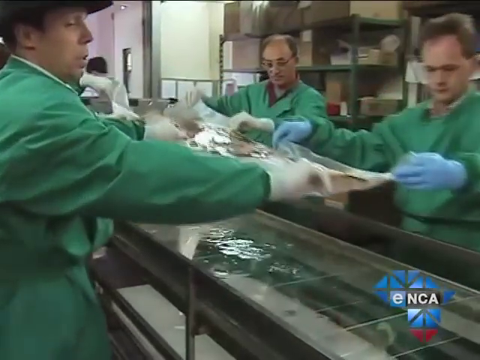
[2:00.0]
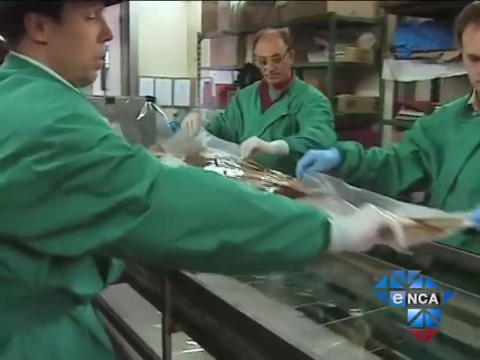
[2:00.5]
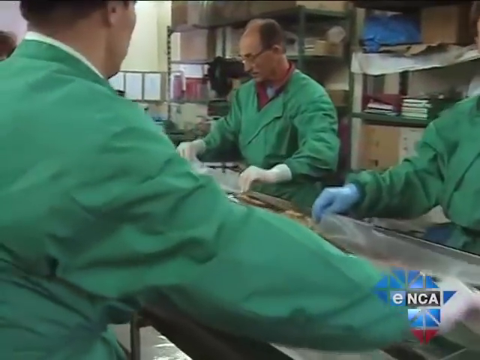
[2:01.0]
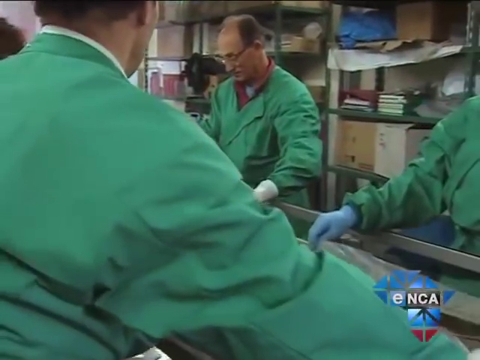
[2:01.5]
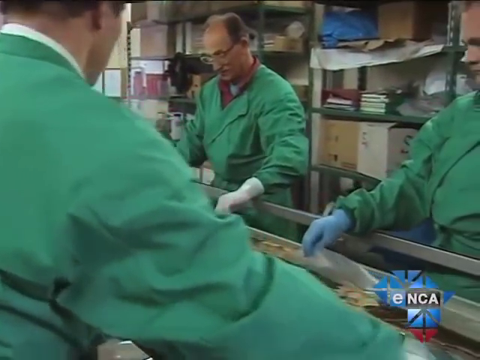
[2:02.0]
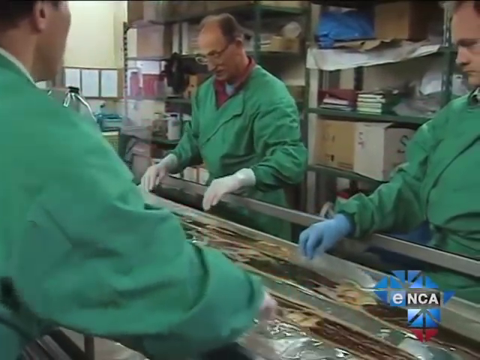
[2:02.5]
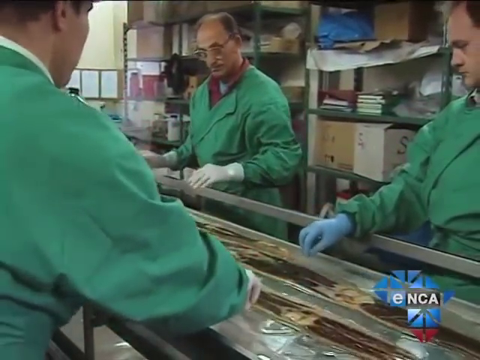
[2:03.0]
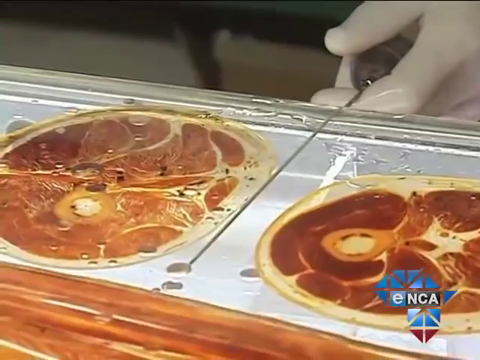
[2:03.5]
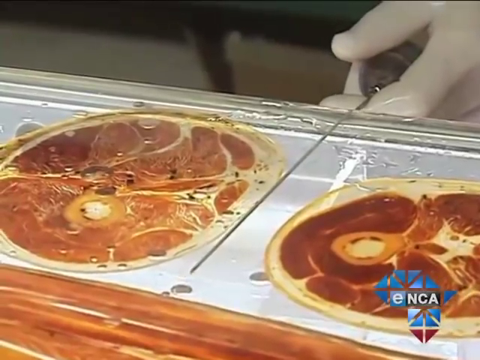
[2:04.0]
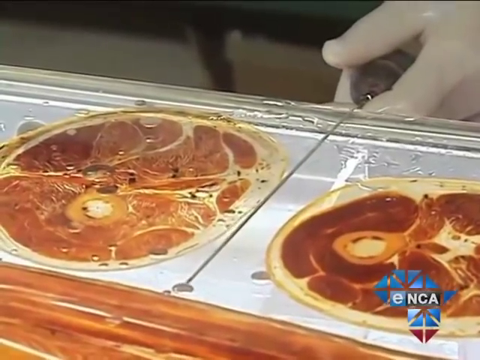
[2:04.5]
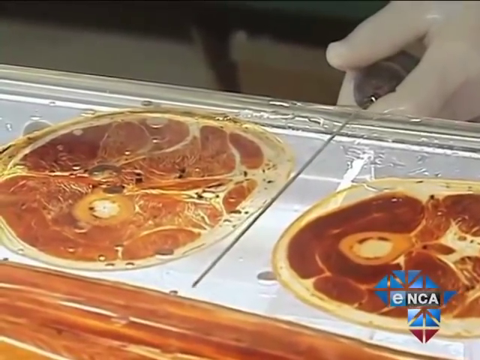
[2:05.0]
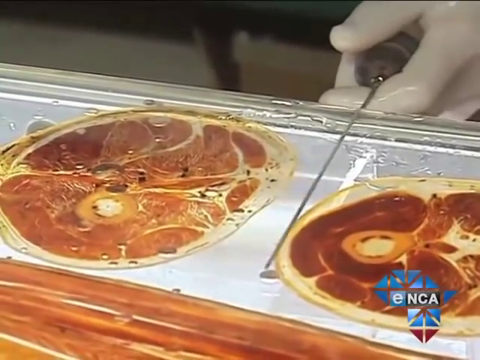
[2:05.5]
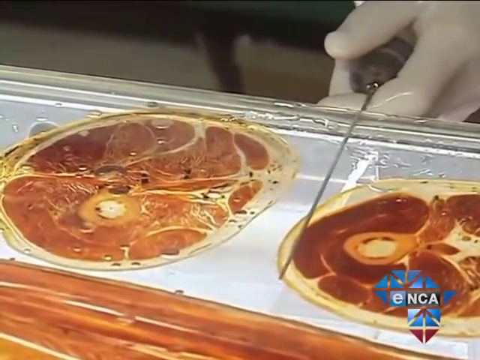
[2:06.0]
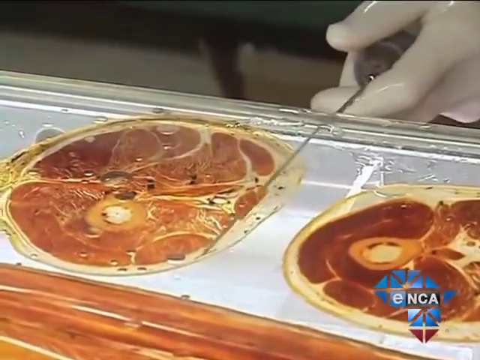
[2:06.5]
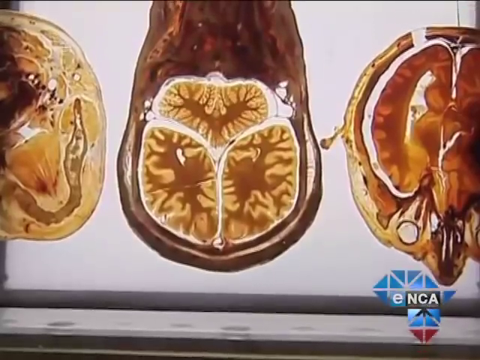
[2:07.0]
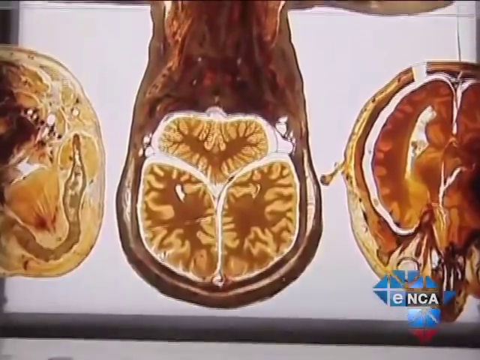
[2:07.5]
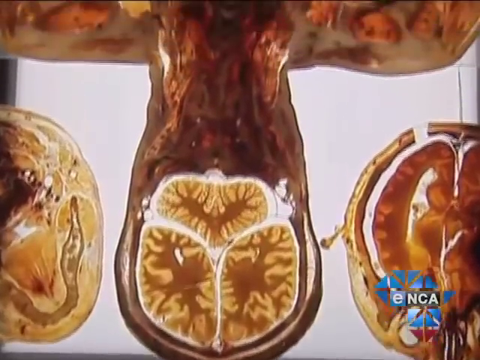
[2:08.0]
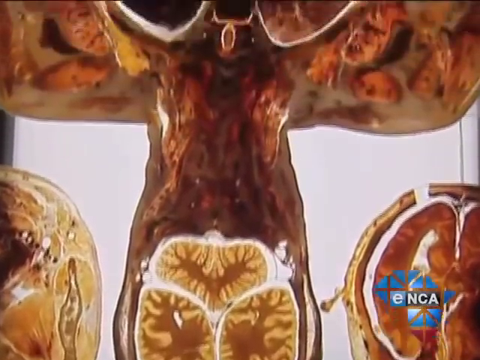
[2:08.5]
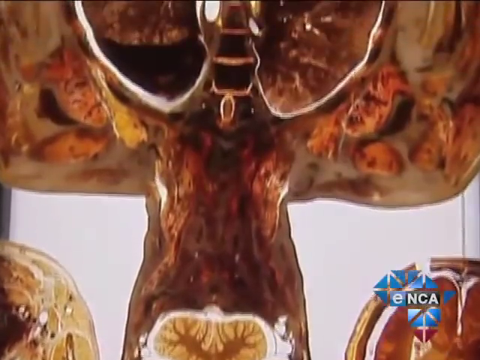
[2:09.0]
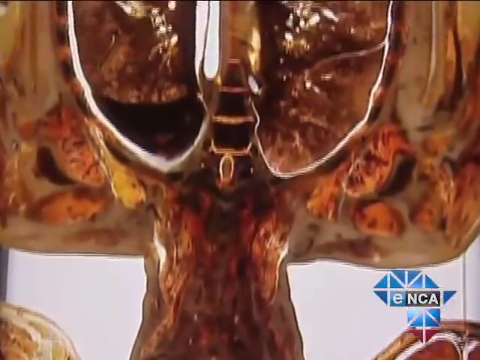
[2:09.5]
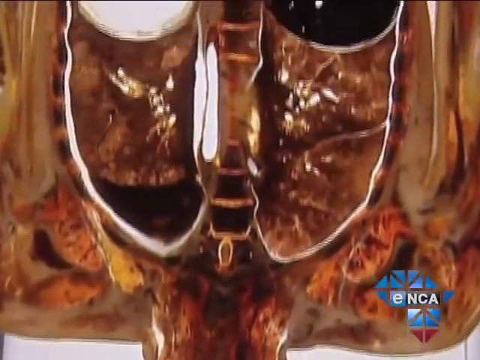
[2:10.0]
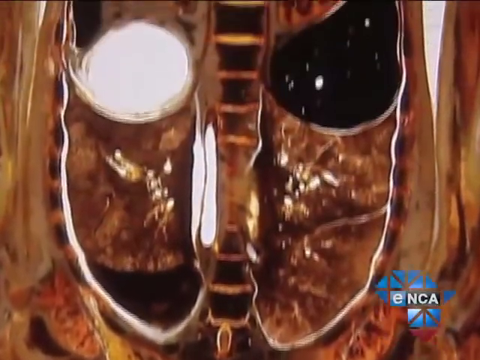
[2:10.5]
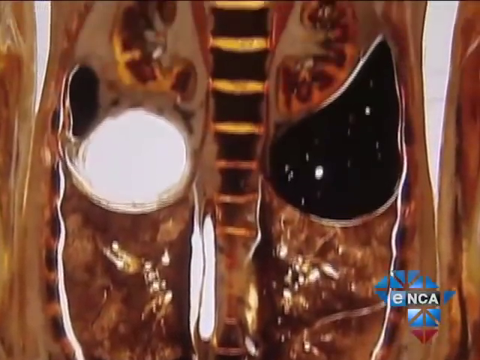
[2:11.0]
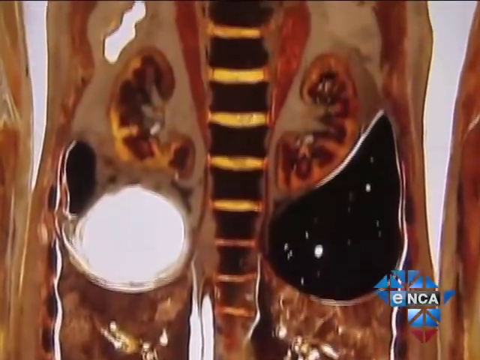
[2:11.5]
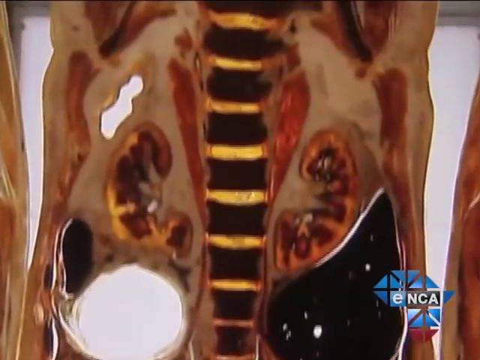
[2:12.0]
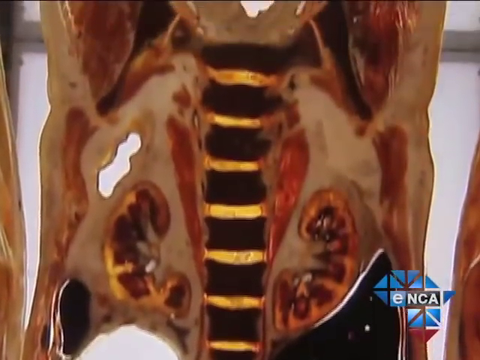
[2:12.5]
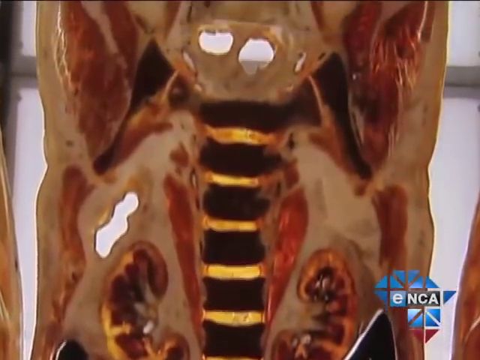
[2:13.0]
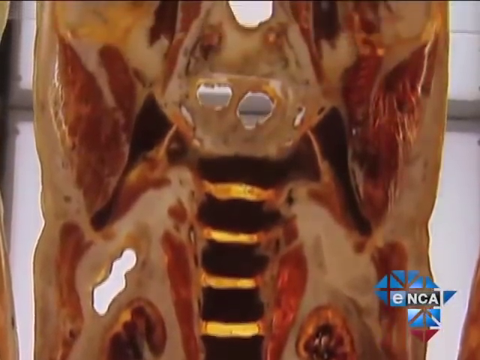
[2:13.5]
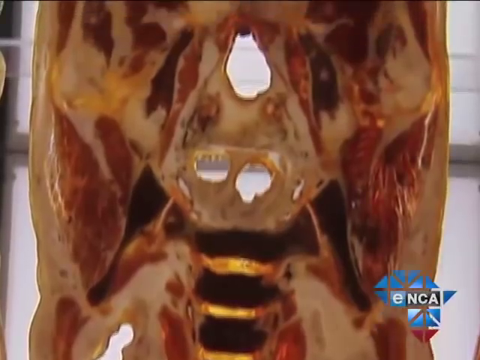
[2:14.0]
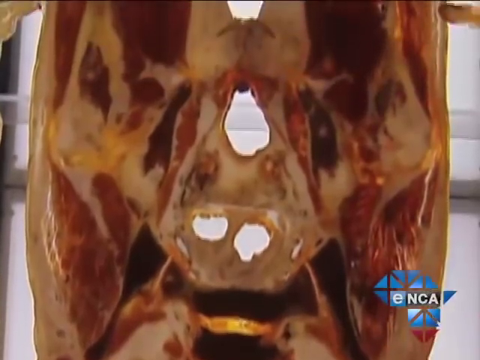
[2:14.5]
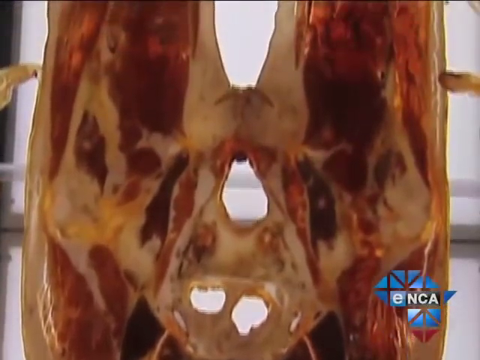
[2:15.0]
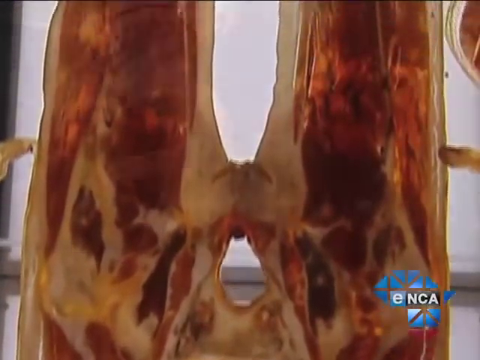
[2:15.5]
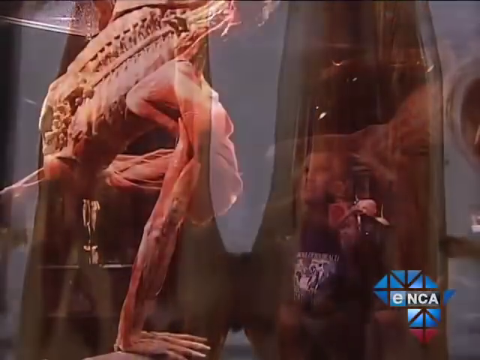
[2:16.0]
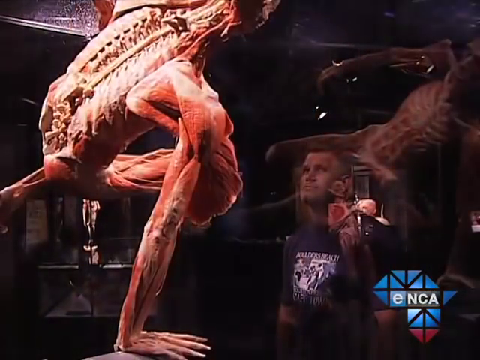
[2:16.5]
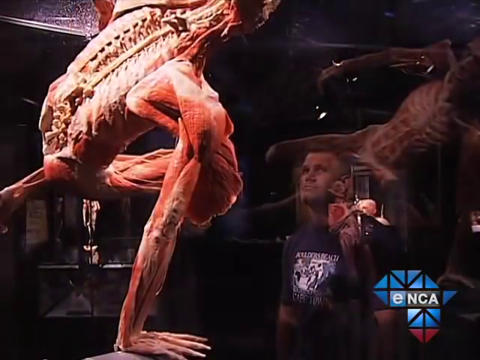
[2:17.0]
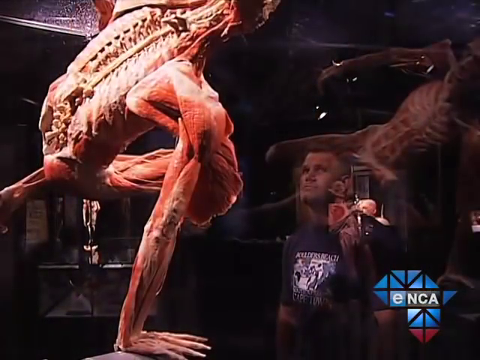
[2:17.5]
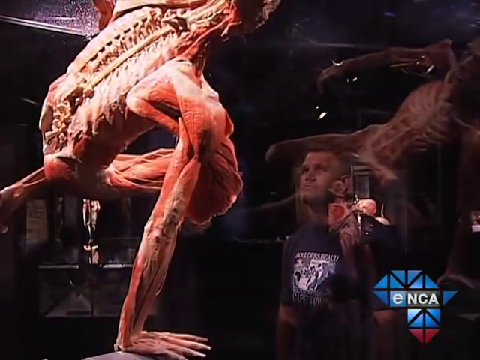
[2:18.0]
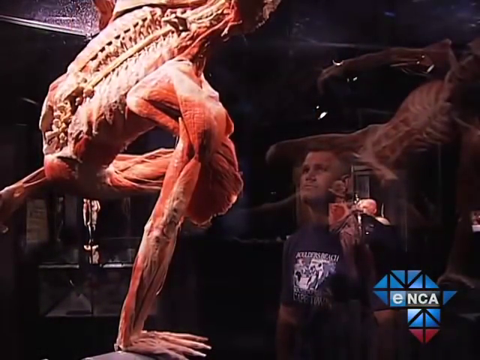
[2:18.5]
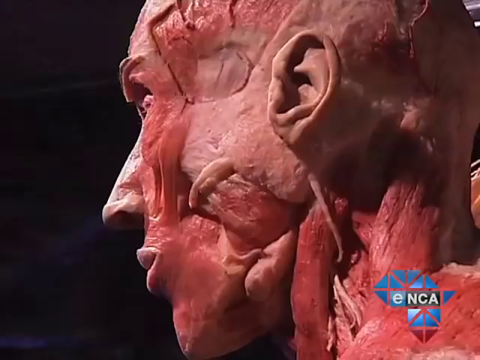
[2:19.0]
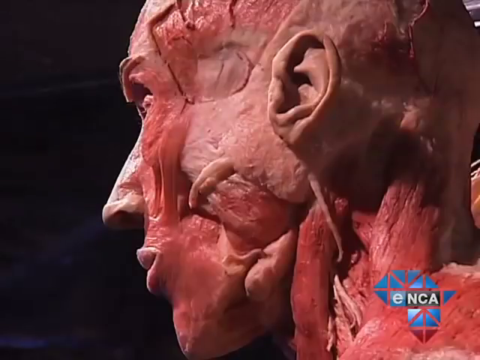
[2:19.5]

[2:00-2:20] Workers get human bodies ready for display. The skin and fat have been removed, exposing the organs, ligaments, tendons and muscles, and the bodies are shown in different positions. The workers lift some lines of plastic, and different cutaways and scans of the human body are shown.